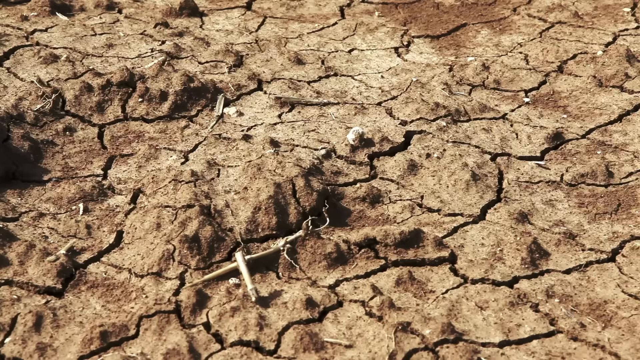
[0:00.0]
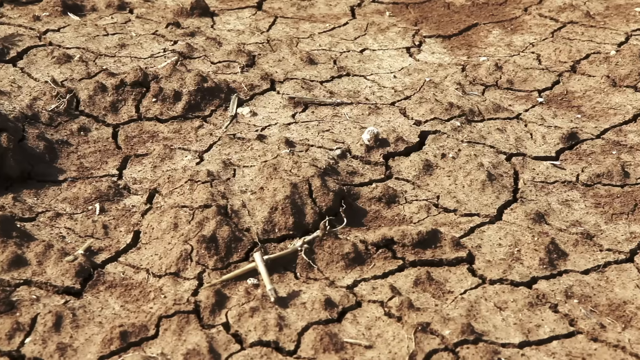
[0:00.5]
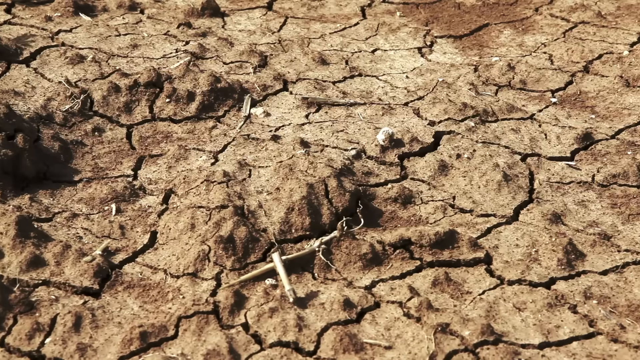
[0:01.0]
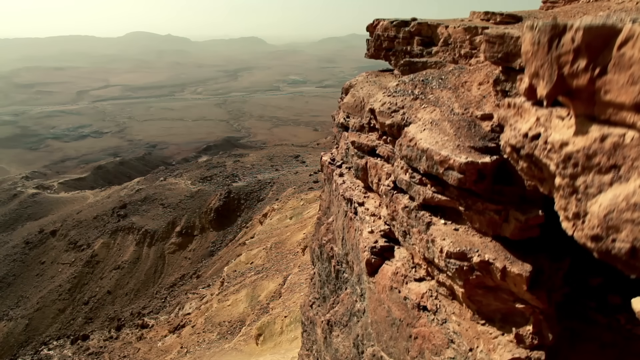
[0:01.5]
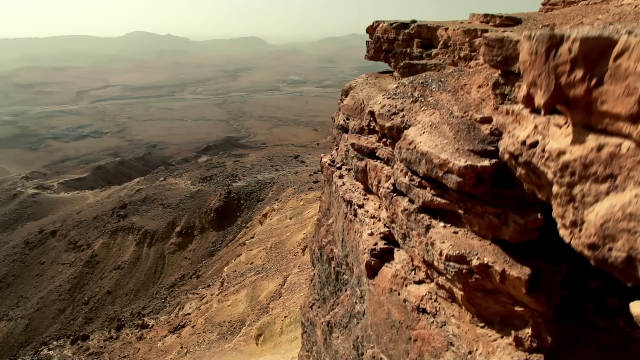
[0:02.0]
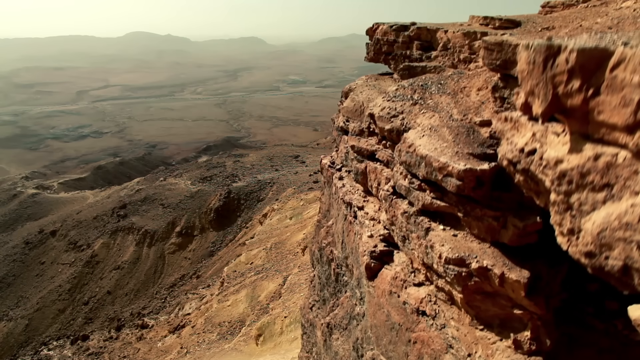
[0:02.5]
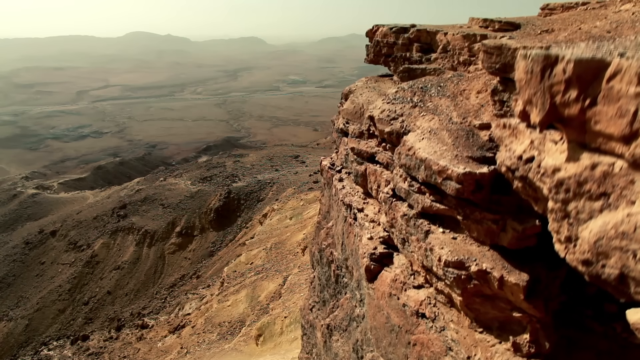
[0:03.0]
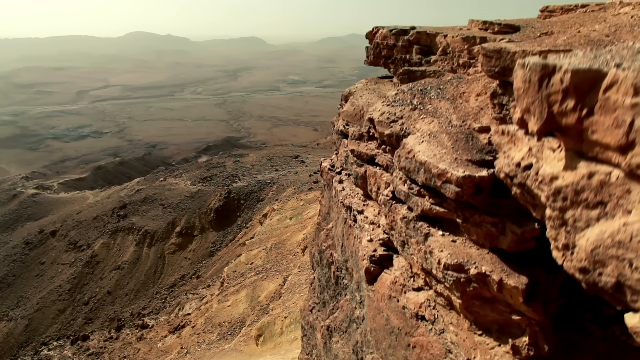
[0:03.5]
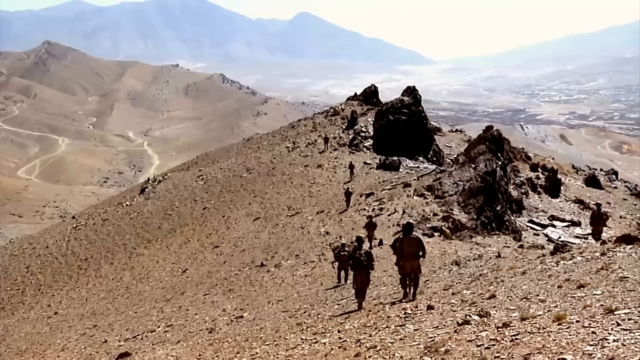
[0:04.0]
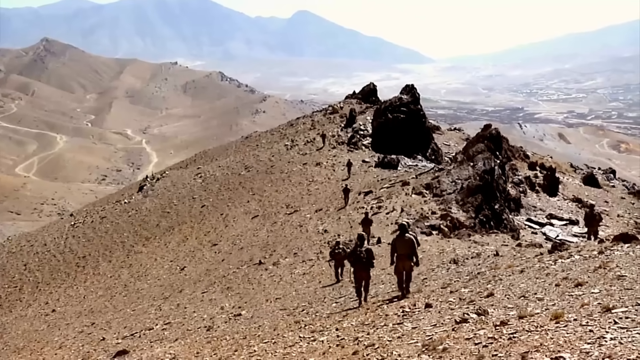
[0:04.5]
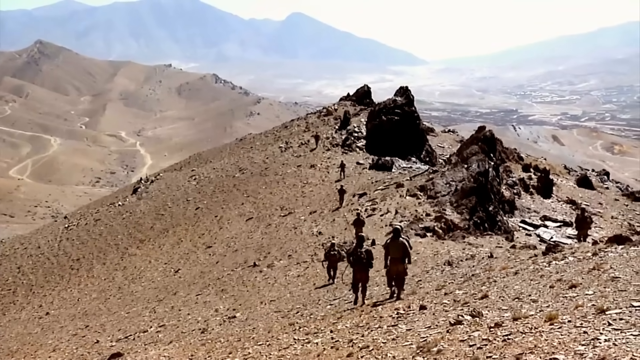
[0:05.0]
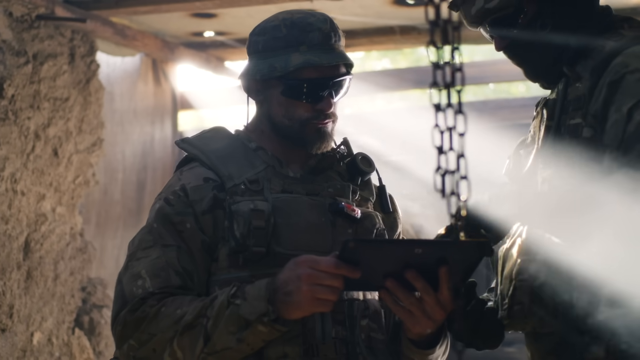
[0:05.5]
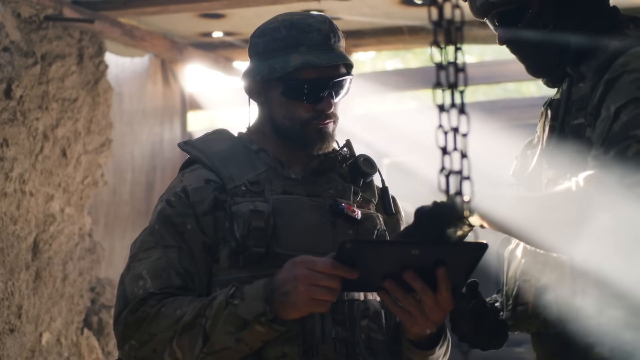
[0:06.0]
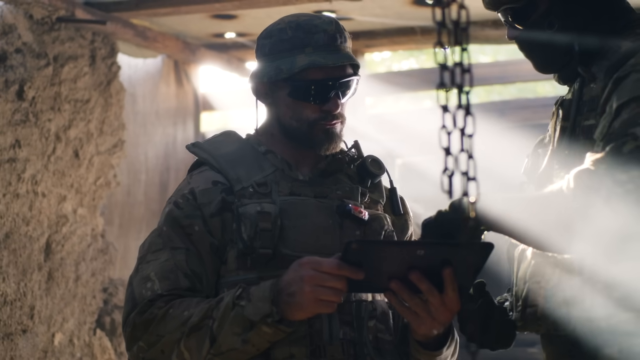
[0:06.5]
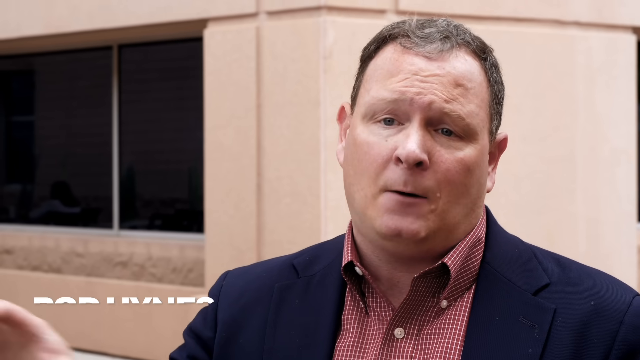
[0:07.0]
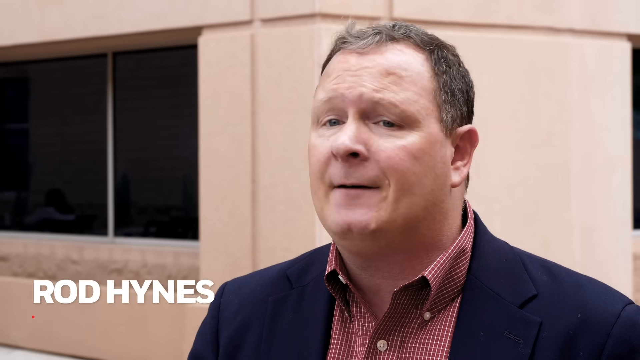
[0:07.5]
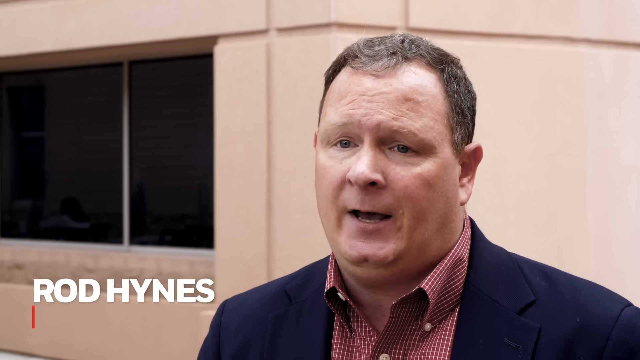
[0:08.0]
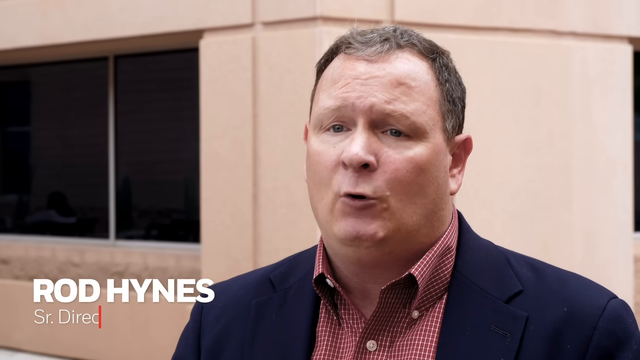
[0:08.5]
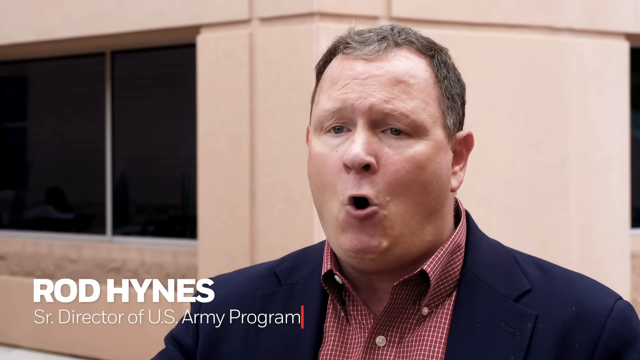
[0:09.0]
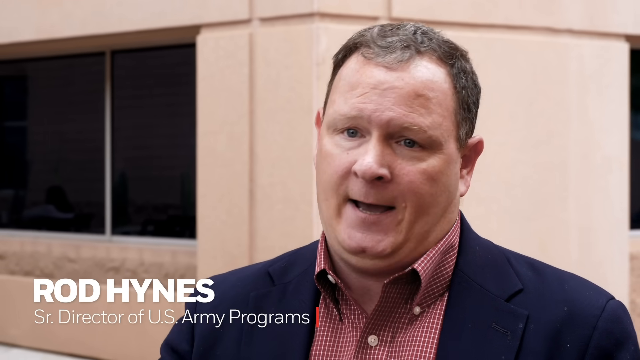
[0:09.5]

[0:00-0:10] The video opens on ground that looks broken because it is so dry, with very big cracks in it. A cliff made entirely of rock appears, and the rock looks extremely dry. Some people are exploring. Inside, a man in a uniform with glasses is in a little bit of a cave. A man named Rod Hines, a senior director of U.S. Army programs, appears, and after his shot, army soldiers walk in a line. The area looks like a place where they are either exploring or doing maneuvers. Inside the cave, the soldier with the goggles is writing on a clipboard, and some chains hang down in front of him.